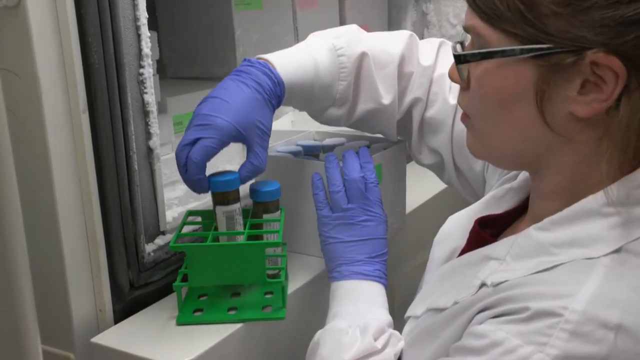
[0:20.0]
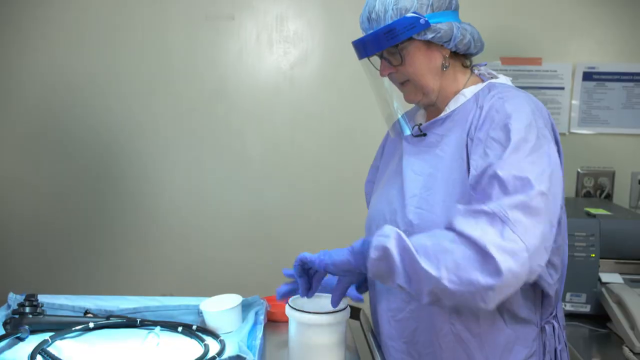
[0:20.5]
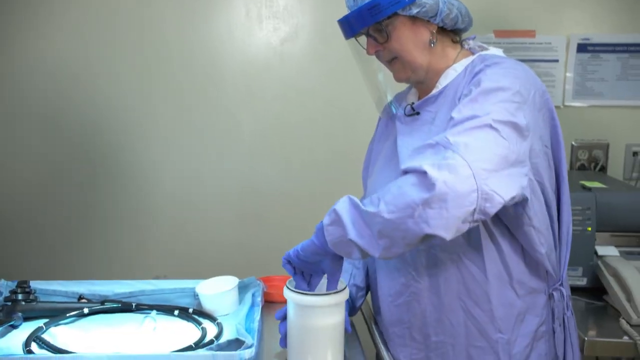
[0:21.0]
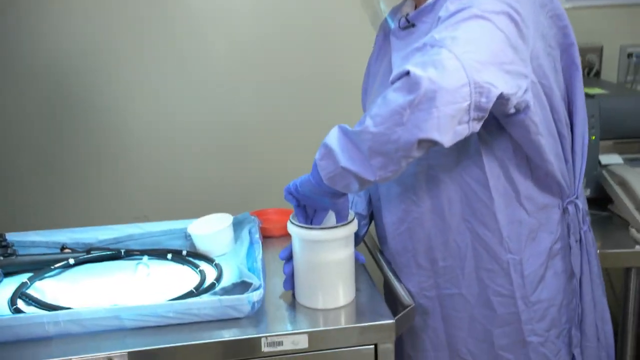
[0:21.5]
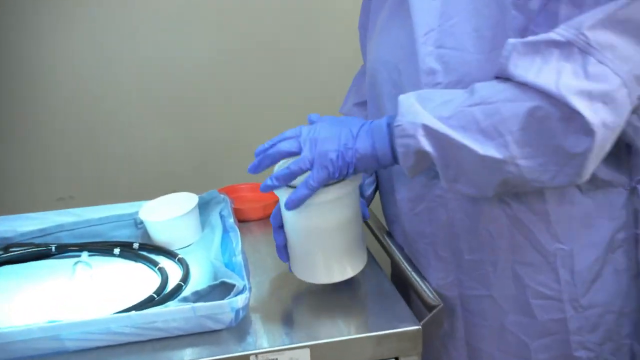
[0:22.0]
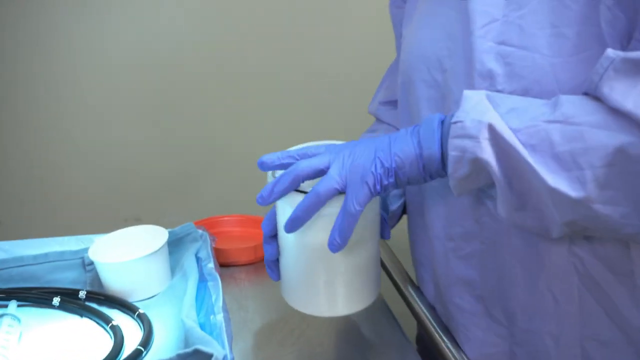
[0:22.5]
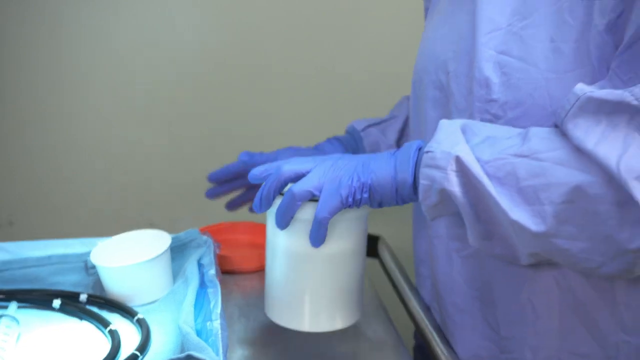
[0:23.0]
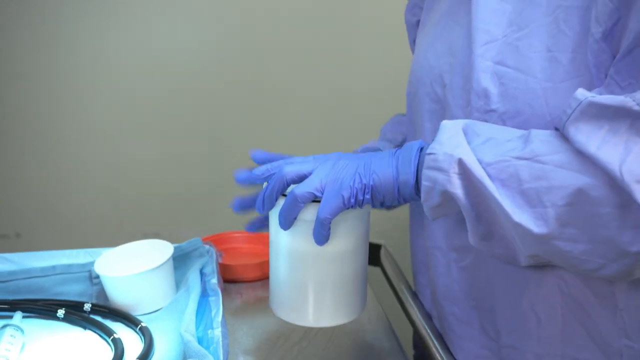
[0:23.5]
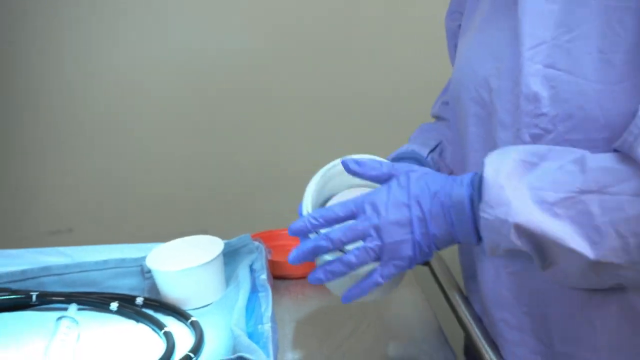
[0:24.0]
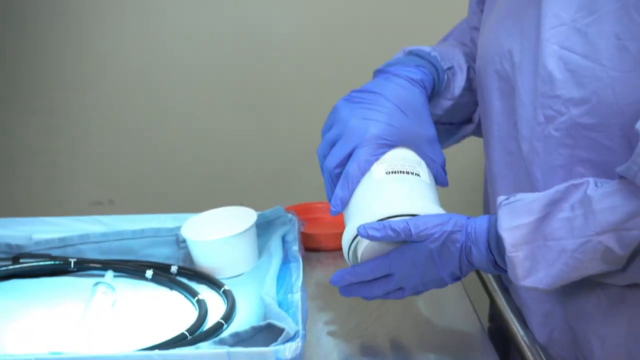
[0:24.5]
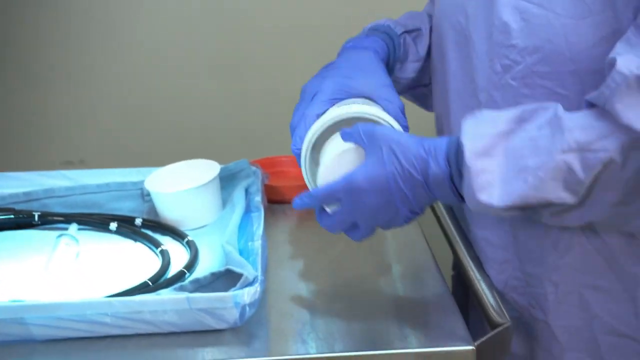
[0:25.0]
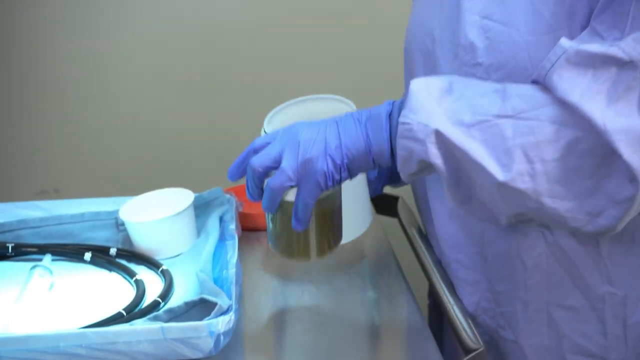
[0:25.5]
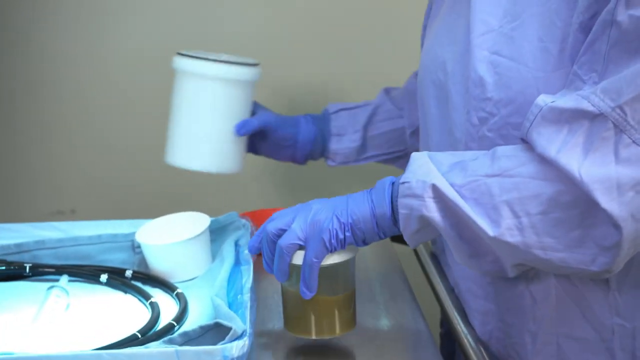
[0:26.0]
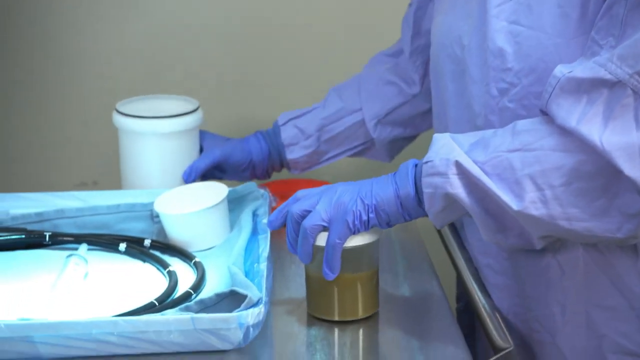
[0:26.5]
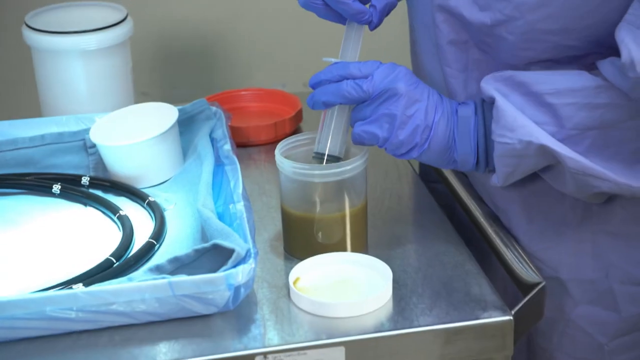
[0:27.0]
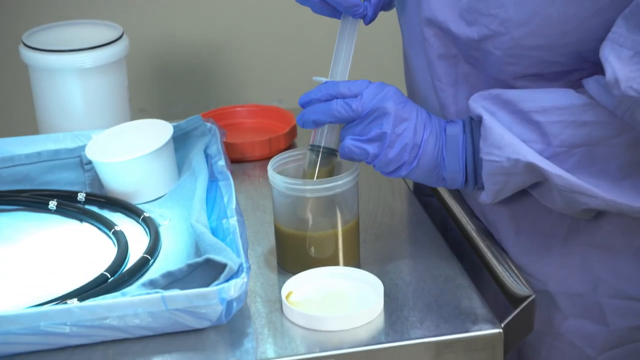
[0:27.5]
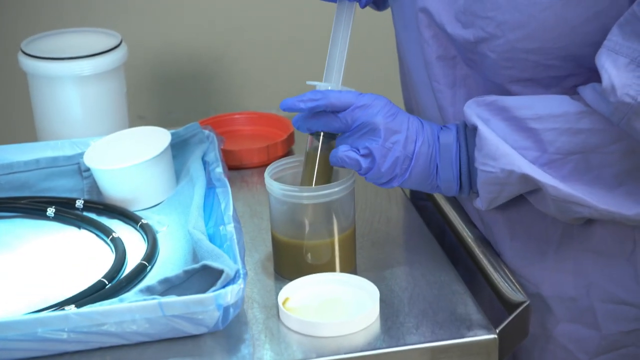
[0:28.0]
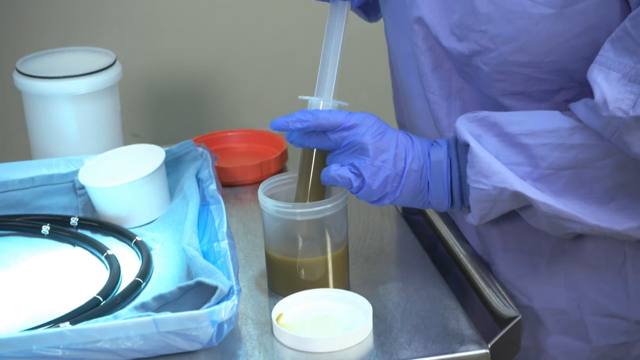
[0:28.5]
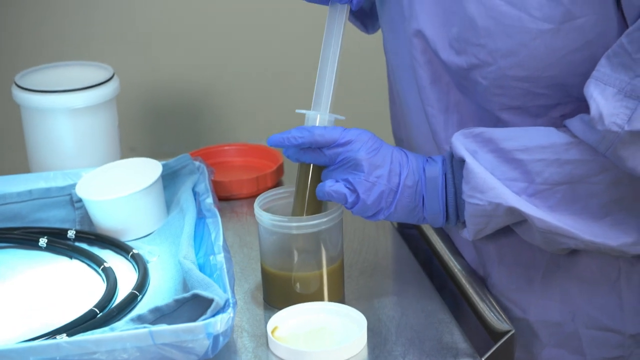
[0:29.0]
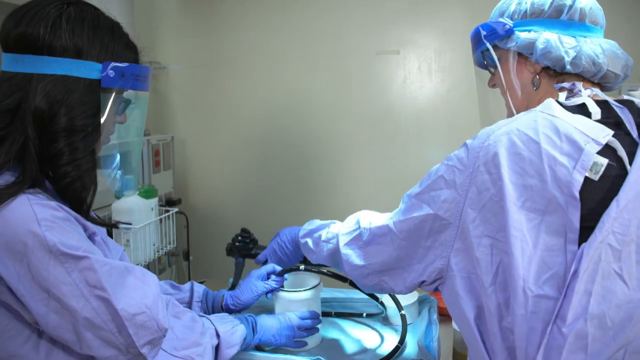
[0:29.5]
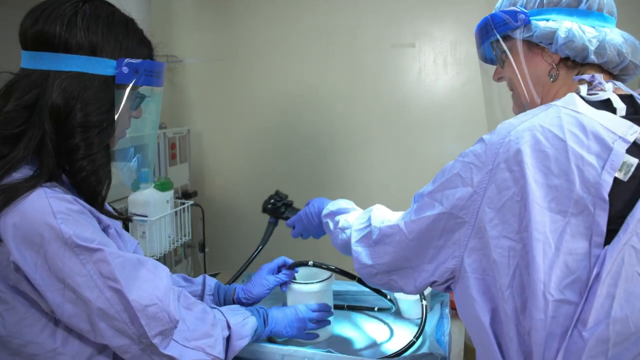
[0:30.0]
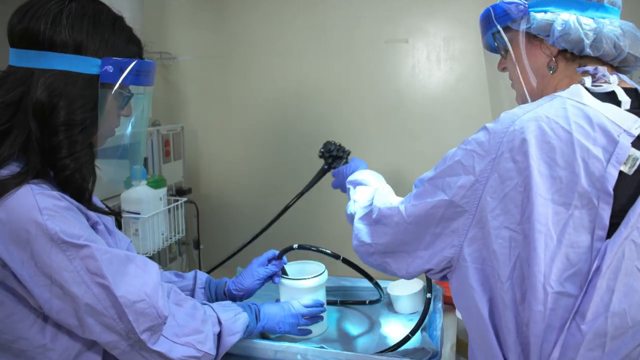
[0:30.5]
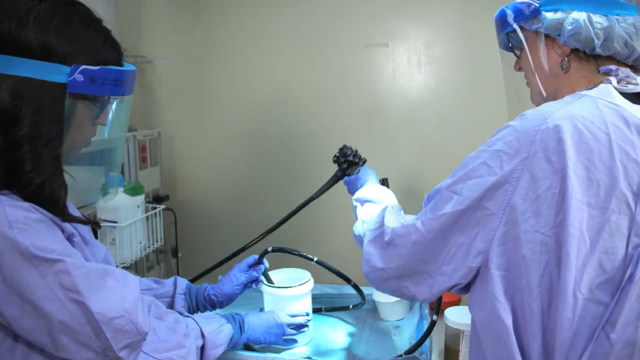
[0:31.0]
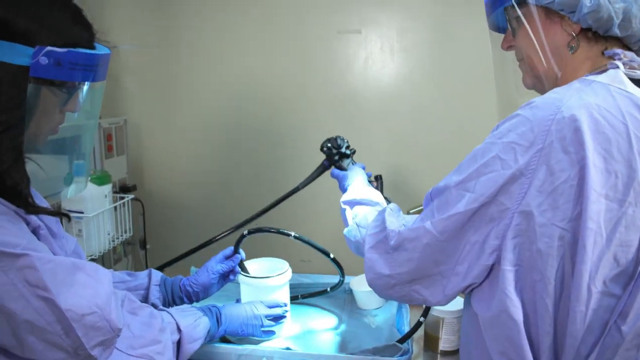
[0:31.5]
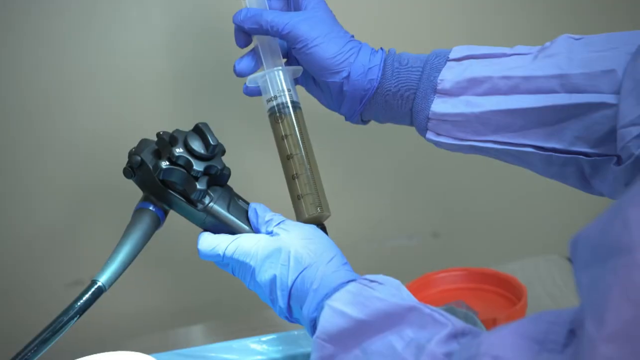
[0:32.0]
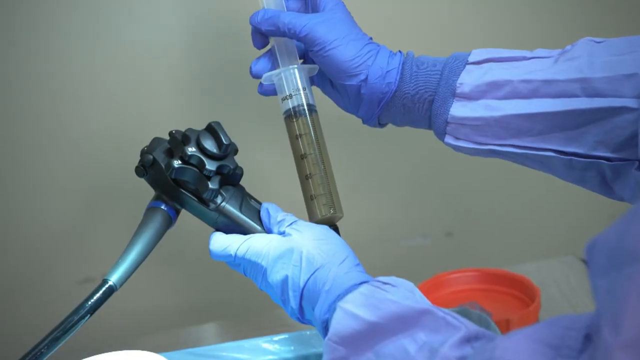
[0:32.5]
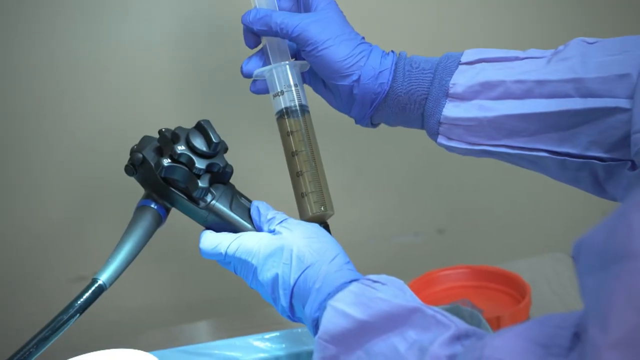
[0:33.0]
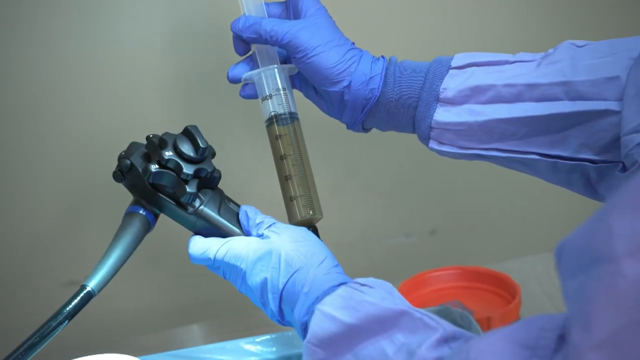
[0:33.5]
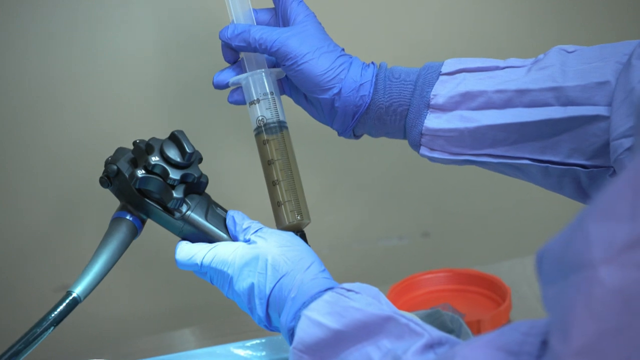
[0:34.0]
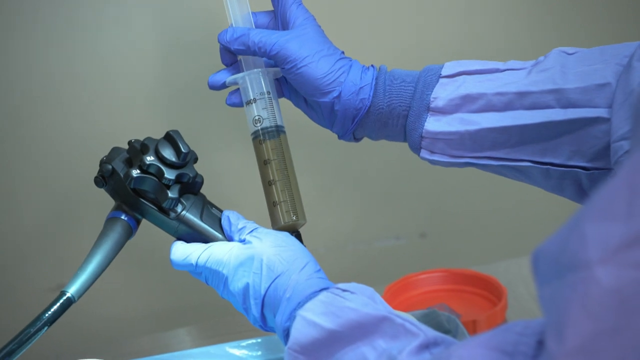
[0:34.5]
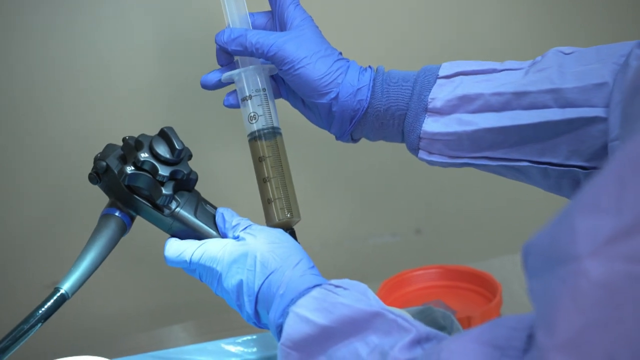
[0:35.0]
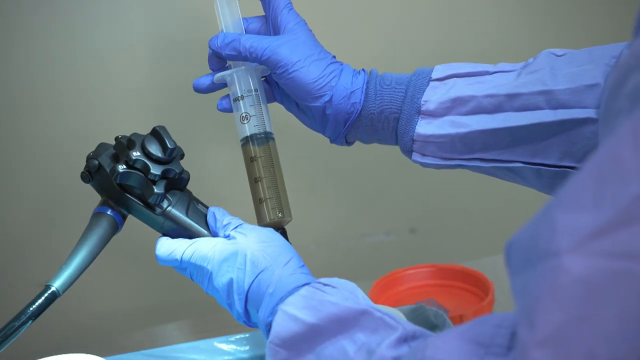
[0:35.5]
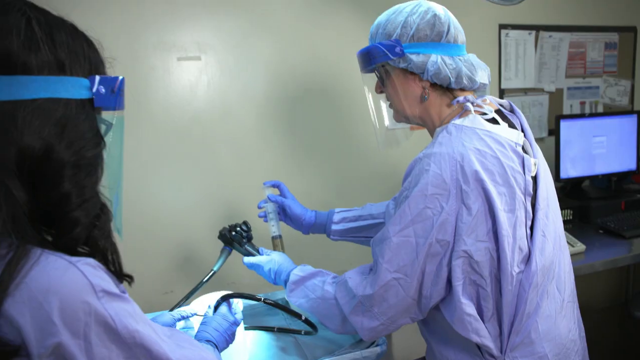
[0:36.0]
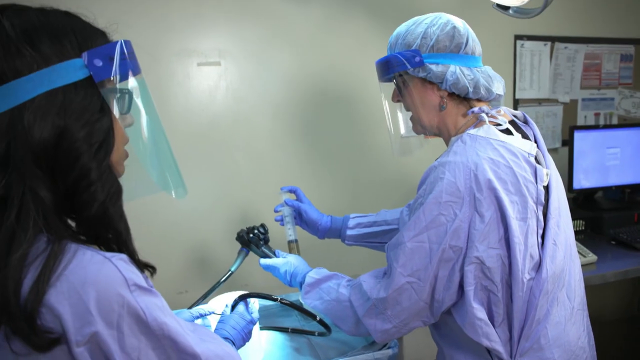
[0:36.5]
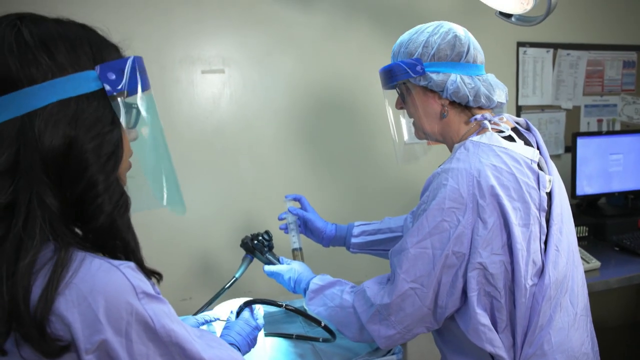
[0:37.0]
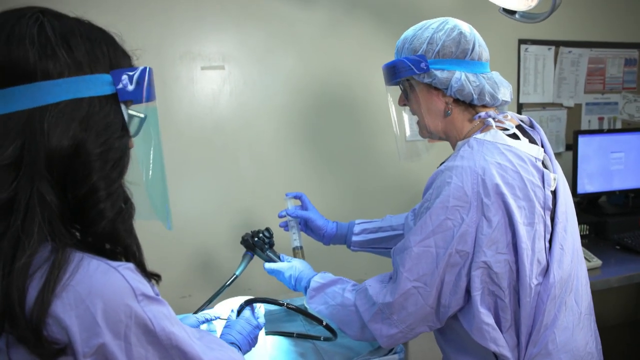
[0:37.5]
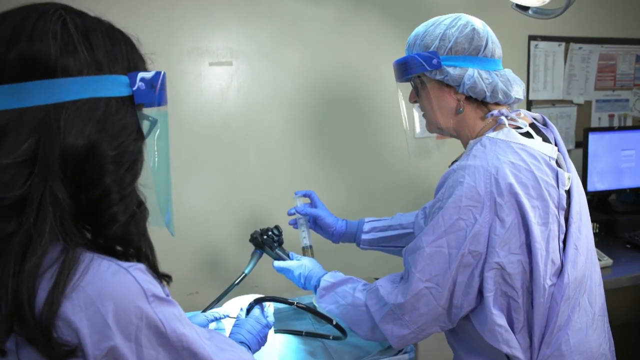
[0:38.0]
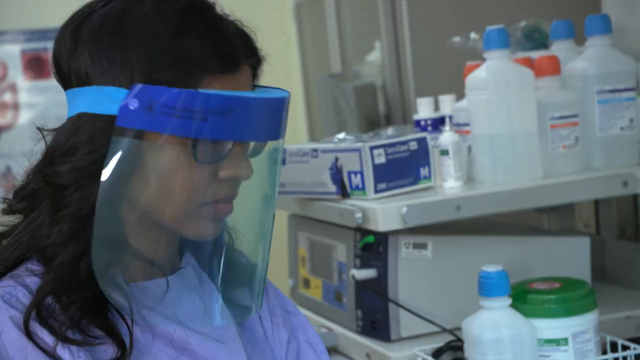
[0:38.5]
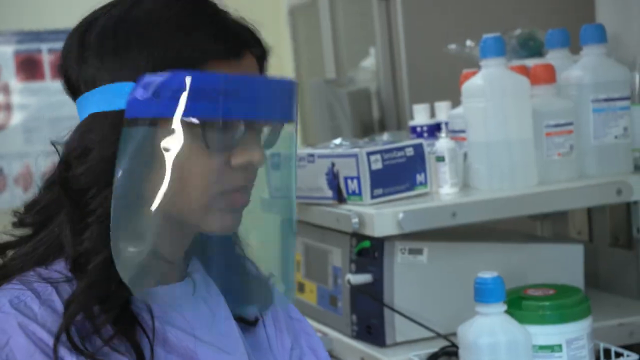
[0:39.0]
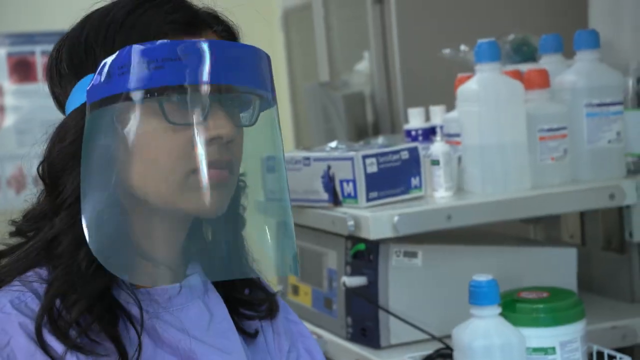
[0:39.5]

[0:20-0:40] The doctor in white overalls, blue gloves and glasses, with brown hair, stands at an open fridge in front of her, at around shoulder height and higher. She pulls vials with blue lids and a green or brown substance, each with a white label, out of a white box and moves them into a green crate to her left. A different doctor then appears, wearing complete blue overalls, blue gloves and some kind of transparent face protection. She reaches into a white circular container and tips out a smaller transparent container with a white lid holding some greeny-brown fluid. She uses a syringe to extract some liquid from the container, holding the base of the syringe with the index finger, middle finger and thumb of her left hand and extending the syringe upwards with her right hand to draw up the liquid. Next is a shot from behind of two doctors, both in blue overalls, face masks and blue gloves; one wears a blue hairnet and one does not. The doctor on the right grabs a black piece of equipment with a long tube attached to it with her left hand. She is then seen holding the black equipment in her left hand with the syringe in her right hand just above it, pushing down with her index finger on the top of the syringe to push the liquid out into something that cannot quite be seen.